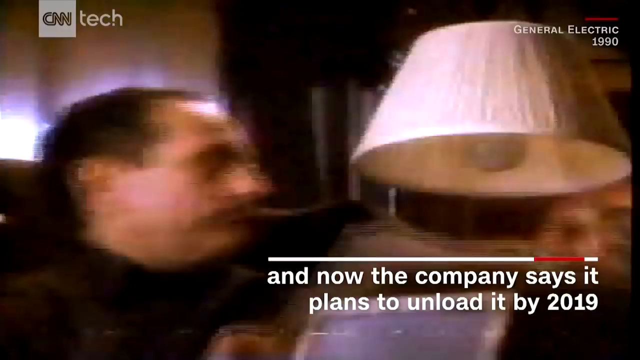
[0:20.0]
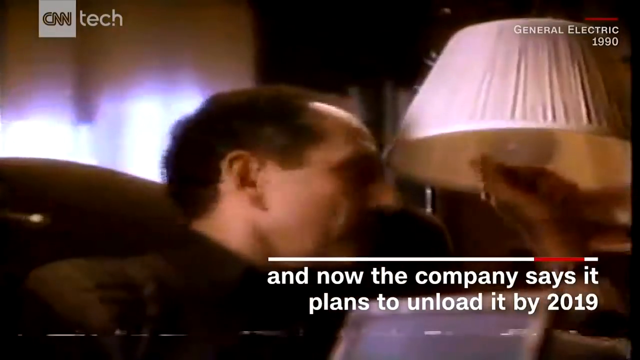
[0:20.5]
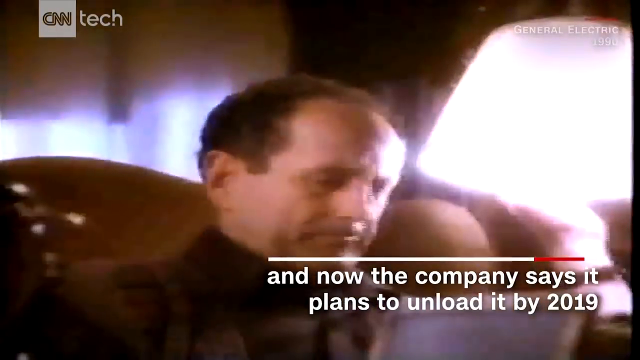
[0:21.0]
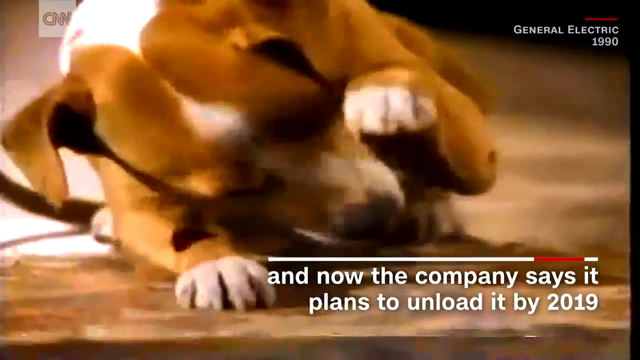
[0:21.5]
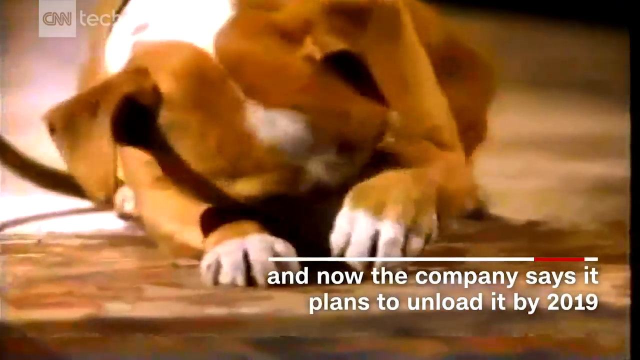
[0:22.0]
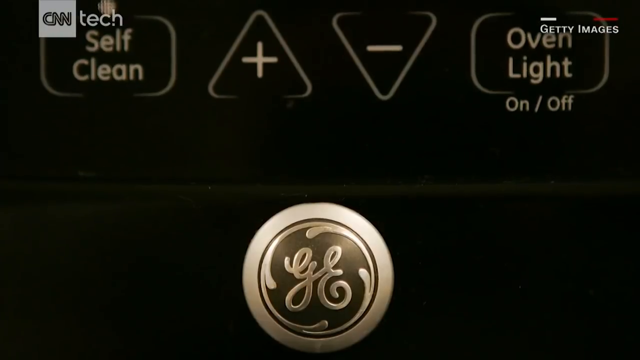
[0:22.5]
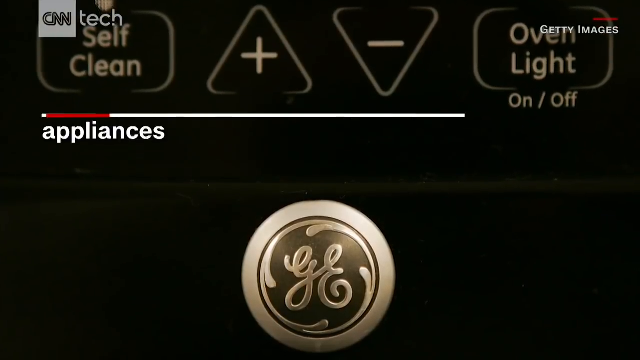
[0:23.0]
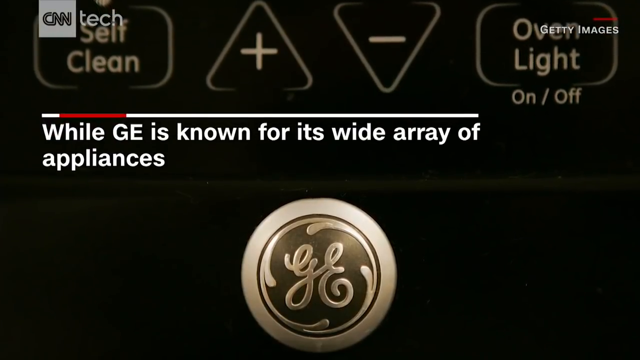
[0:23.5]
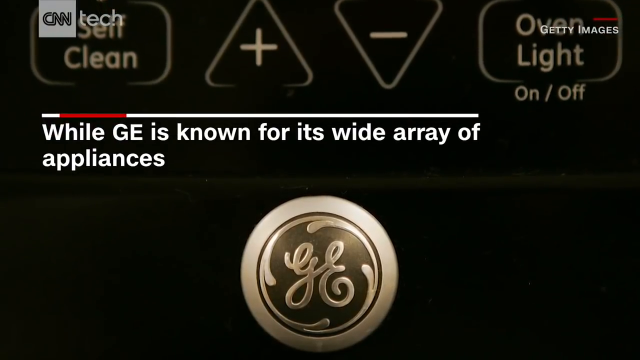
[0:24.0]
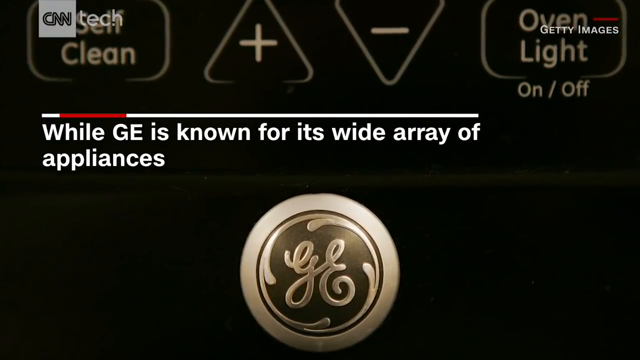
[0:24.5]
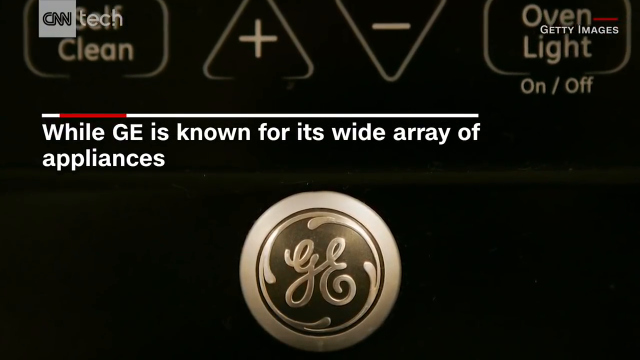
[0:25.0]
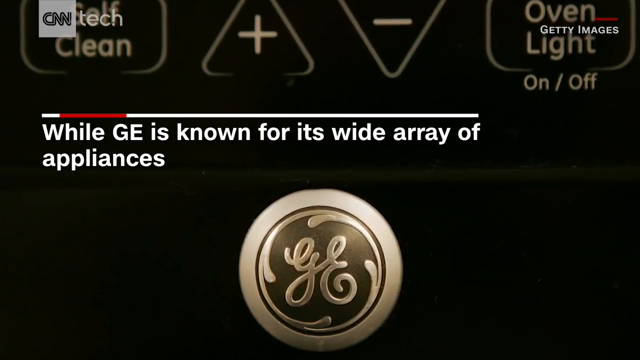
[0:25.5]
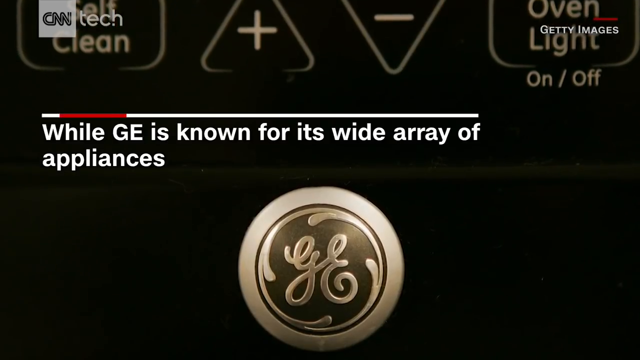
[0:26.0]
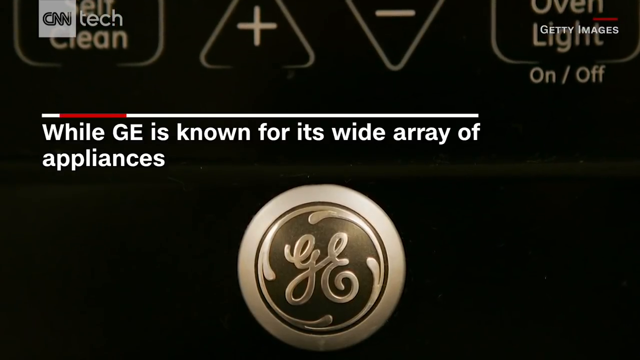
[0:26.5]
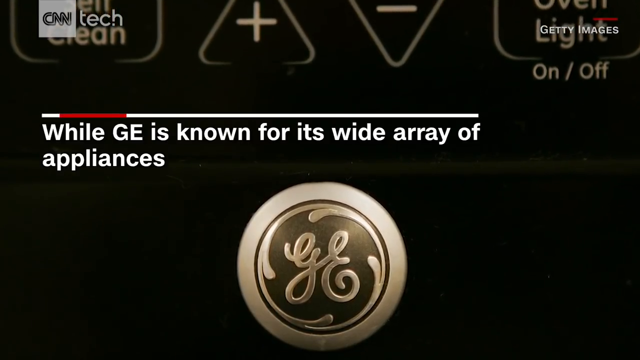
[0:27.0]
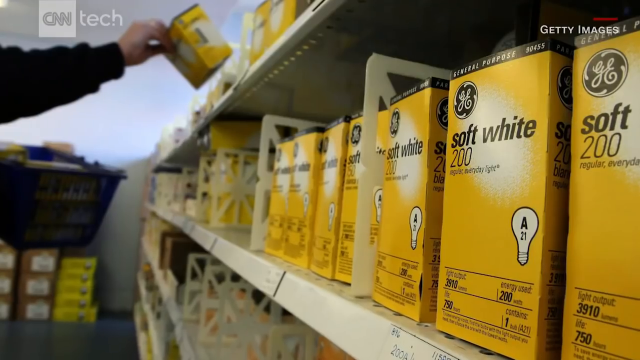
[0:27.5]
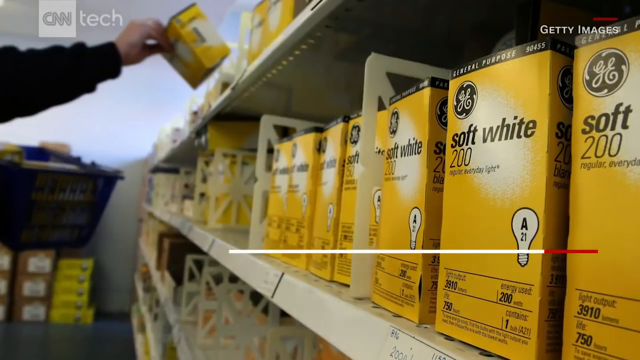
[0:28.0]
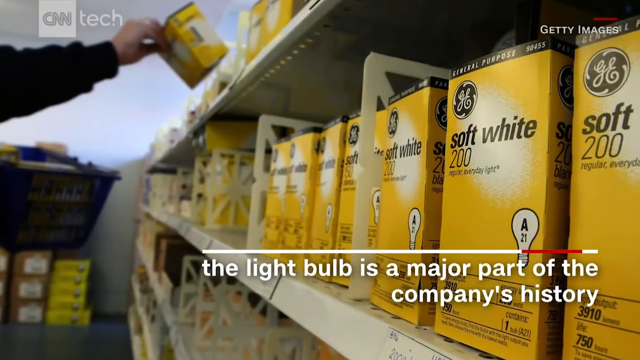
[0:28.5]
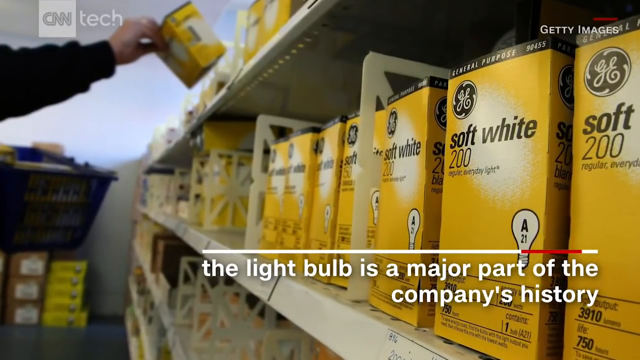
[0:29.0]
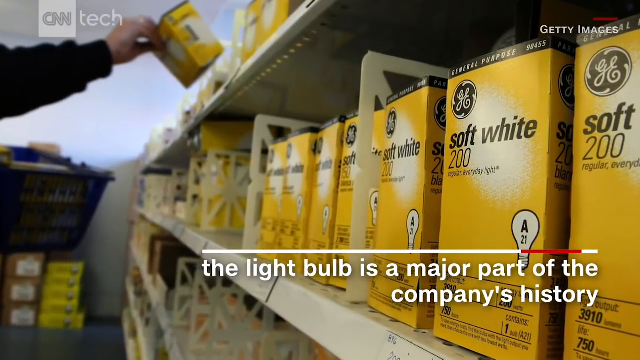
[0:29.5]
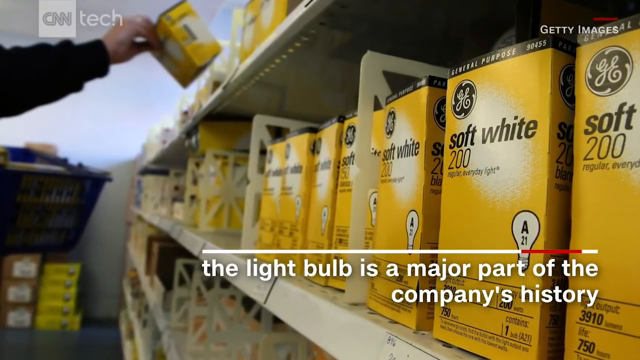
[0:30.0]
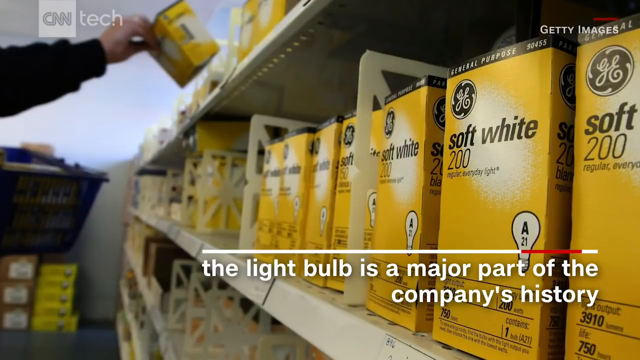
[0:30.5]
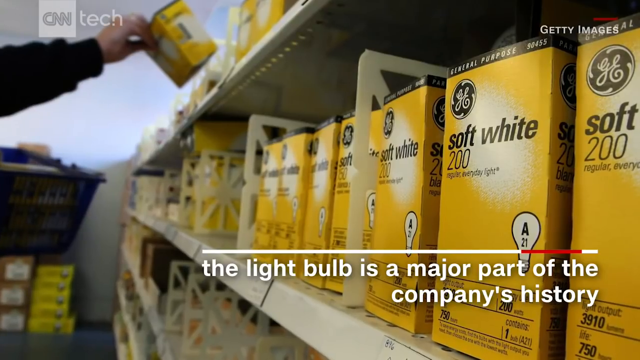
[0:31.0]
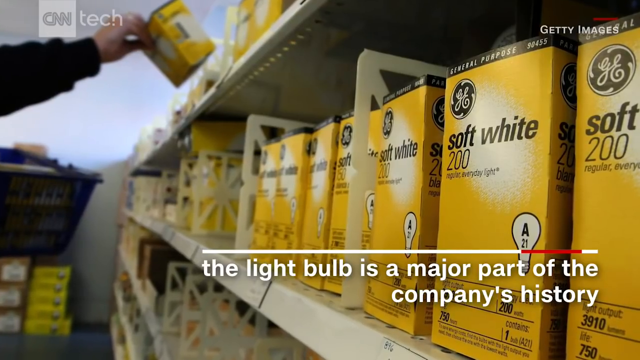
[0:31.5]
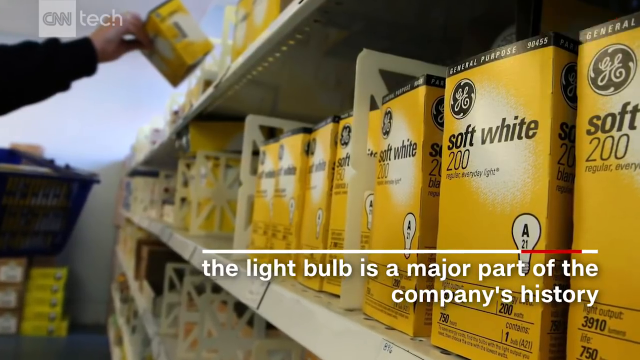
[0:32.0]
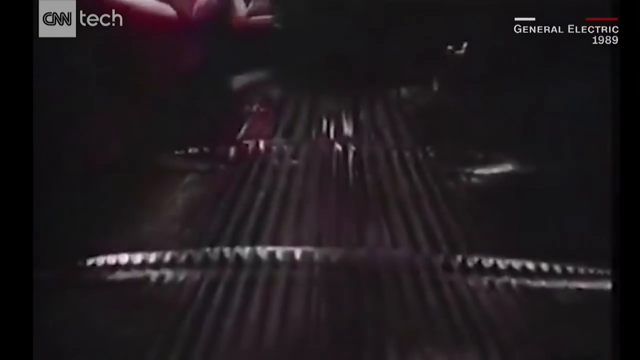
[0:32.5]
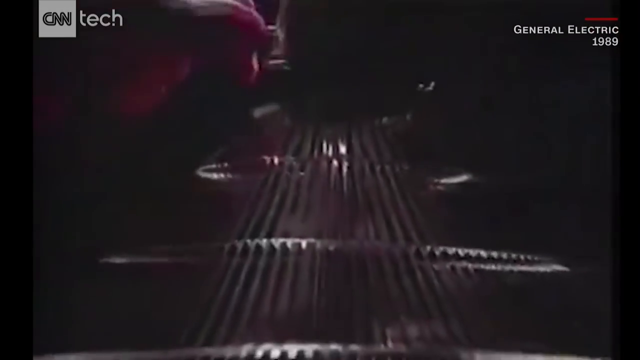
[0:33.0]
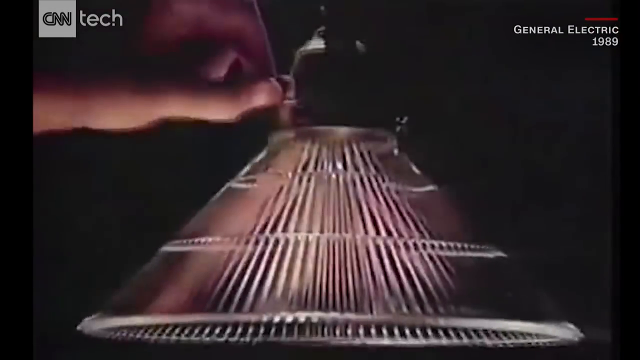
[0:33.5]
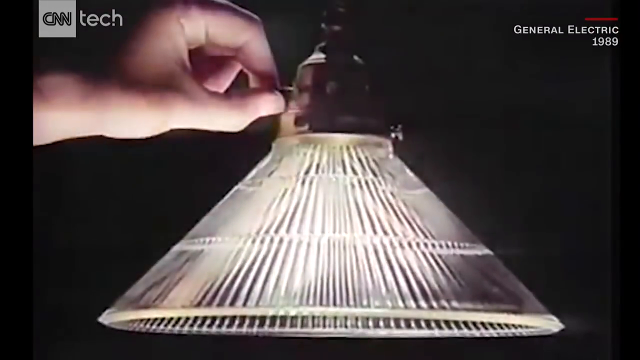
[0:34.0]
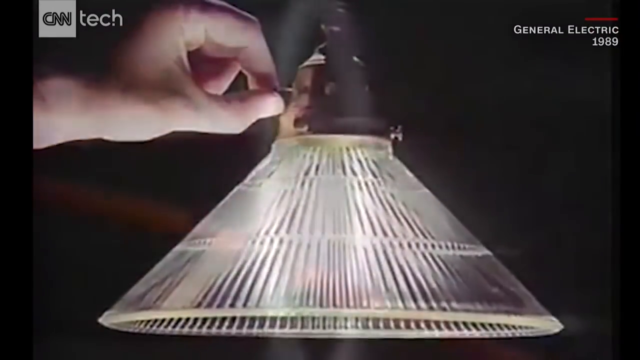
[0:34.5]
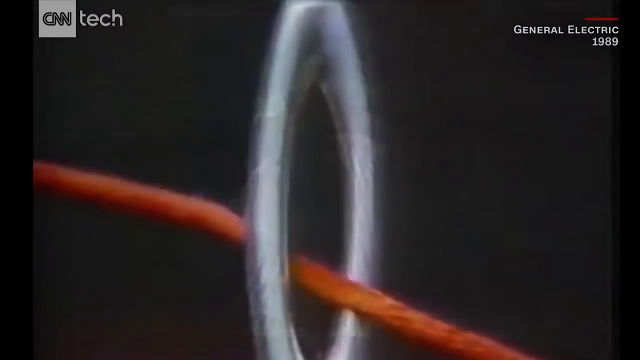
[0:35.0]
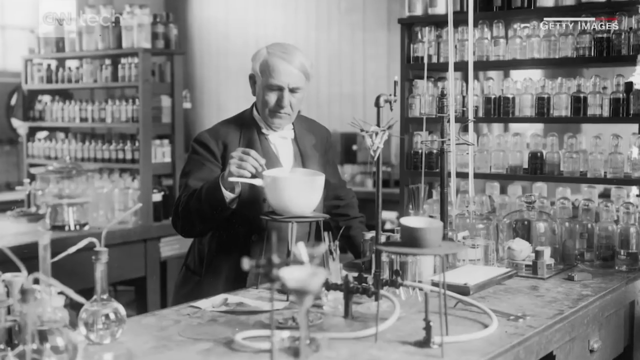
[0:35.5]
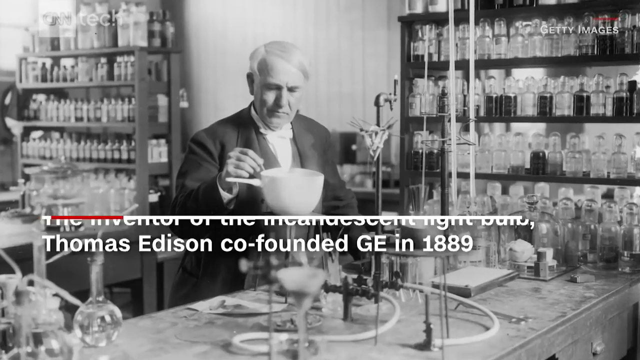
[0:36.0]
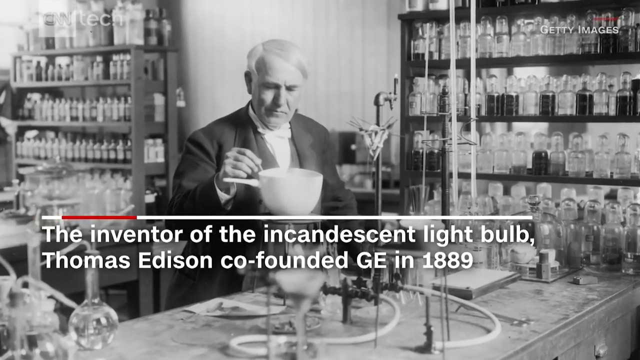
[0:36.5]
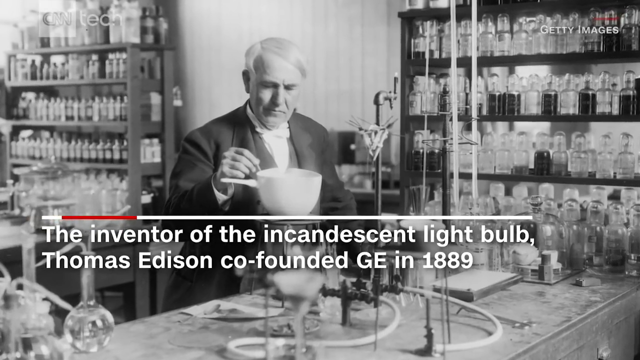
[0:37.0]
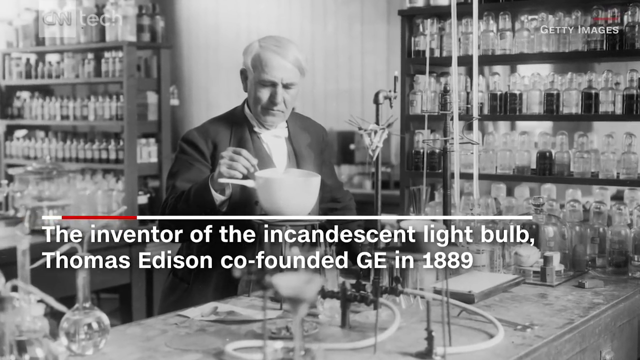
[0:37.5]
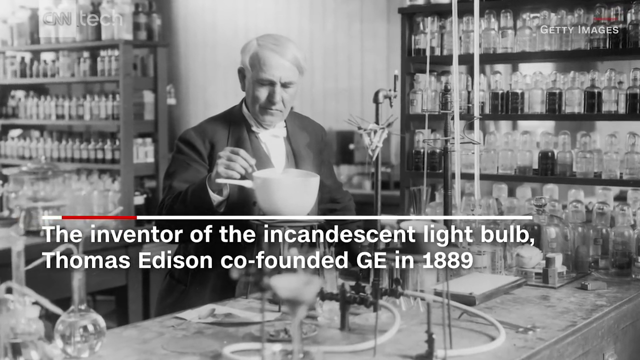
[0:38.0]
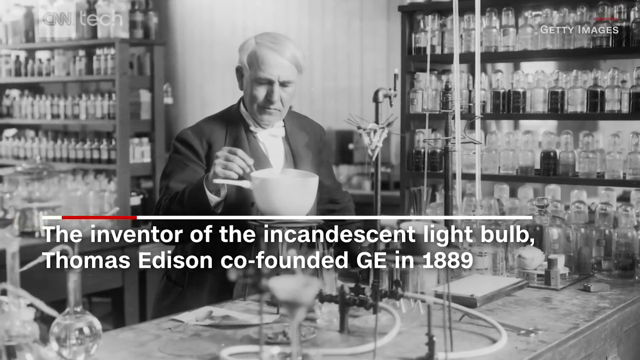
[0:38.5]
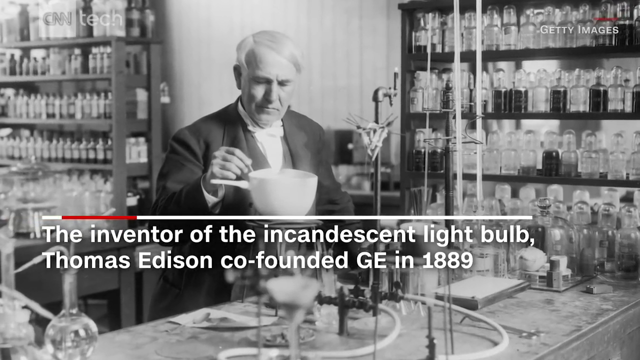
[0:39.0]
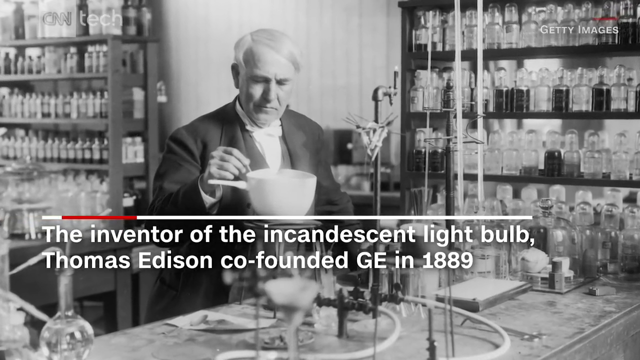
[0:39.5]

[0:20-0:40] The girl has just taken the bulb, and a man is shown sitting in a chair, possibly her father, probably in his 40s, with short dark hair and a dark shirt. He turns on the lamp, and the light bulb is now extremely bright. The camera pans over to a dog that looks like maybe a boxer, brown and white, which acts as if affected by the light, tucking its head down and covering its face with a paw. Next comes a very close-up image of what looks like an oven panel: buttons across the top read "self-clean", then a plus button, a minus button, and one reading "oven light on off", with a GE logo emblem below. Across the middle of the screen the text reads "while GE is known for its wide array of appliances". The scene then shifts to the inside of some kind of store, where a person is either removing or adding boxes to a shelf of various light bulbs, all in yellow GE boxes; the ones closest to the screen say "soft white 200". Text across the bottom reads "the light bulb is a major part of the company's history." Next is an image of a more vintage lamp with a glass shade, and a hand coming in from the left turns the lamp on. Then a black and white photo appears of what is presumably Thomas Edison in a laboratory, with text across the bottom reading "the inventor of the incandescent light bulb, Thomas Edison, co-founded GE in 1889."